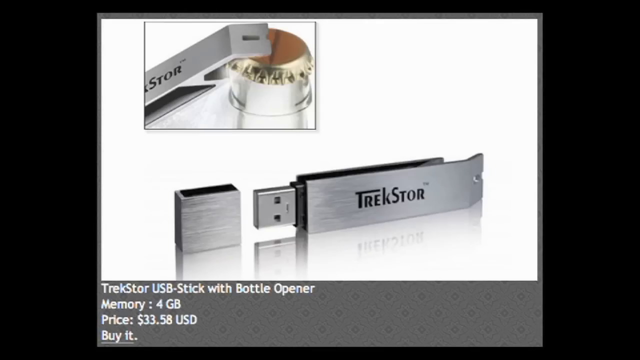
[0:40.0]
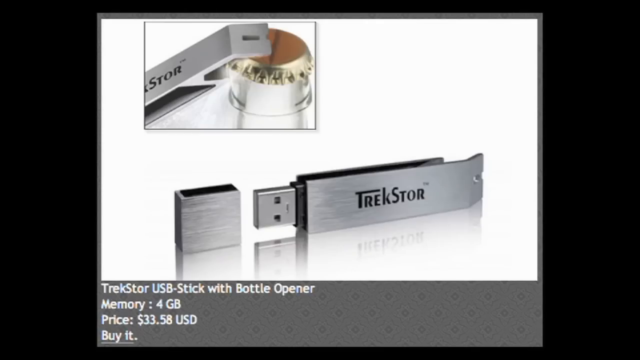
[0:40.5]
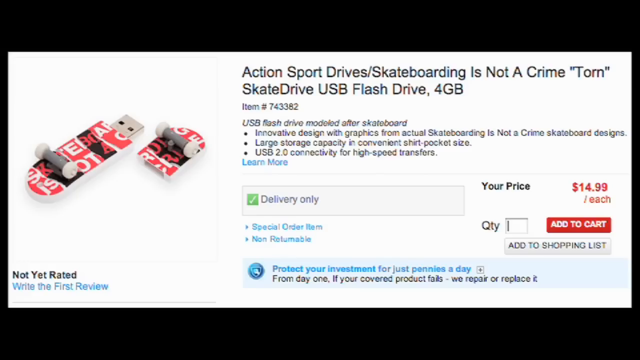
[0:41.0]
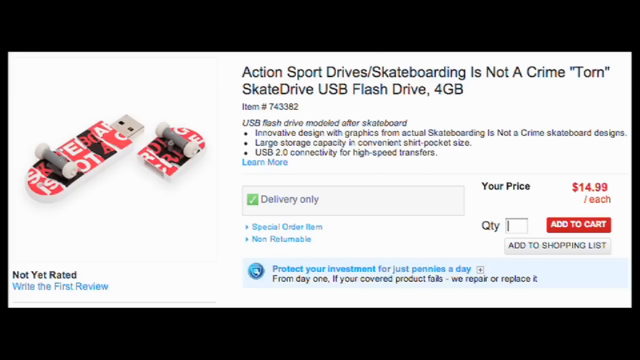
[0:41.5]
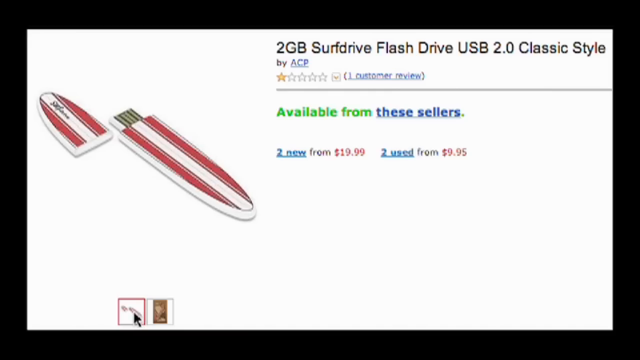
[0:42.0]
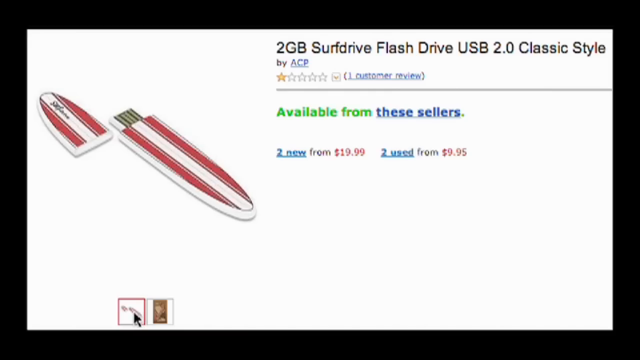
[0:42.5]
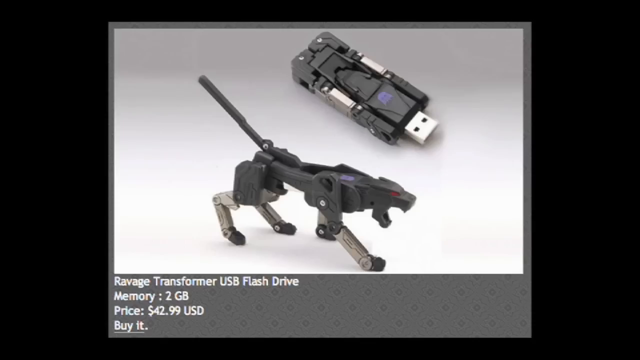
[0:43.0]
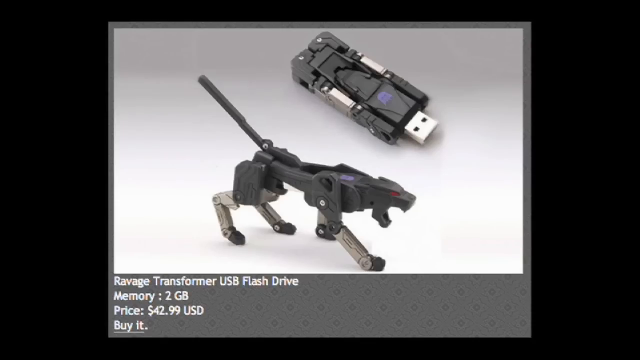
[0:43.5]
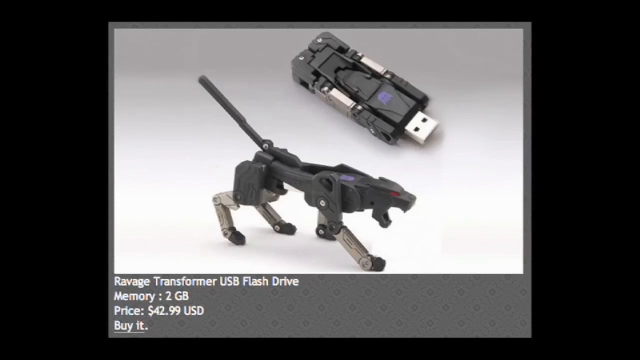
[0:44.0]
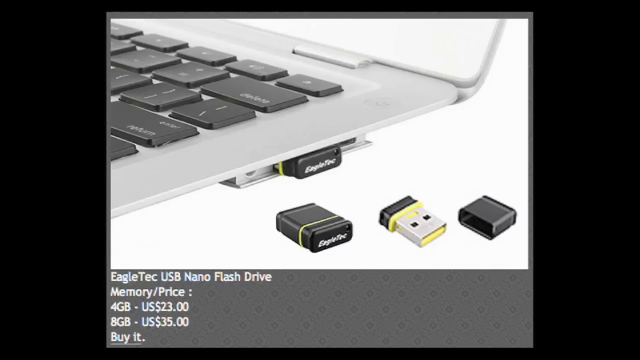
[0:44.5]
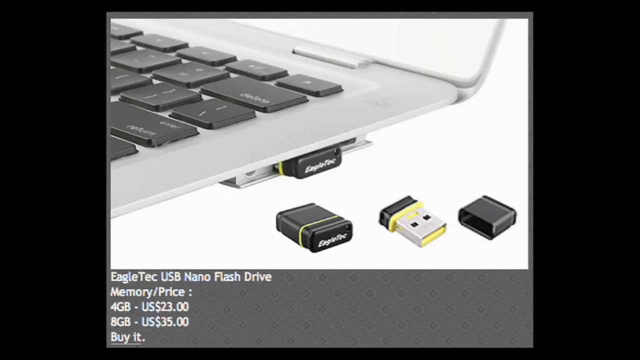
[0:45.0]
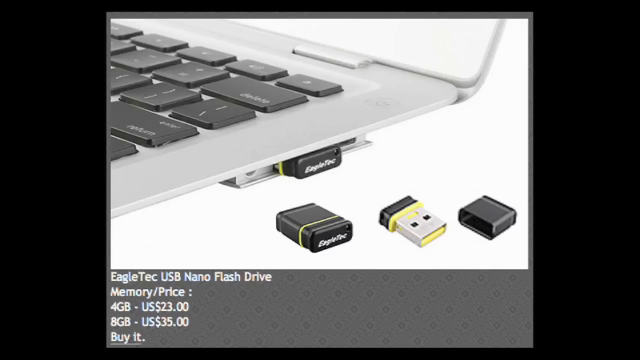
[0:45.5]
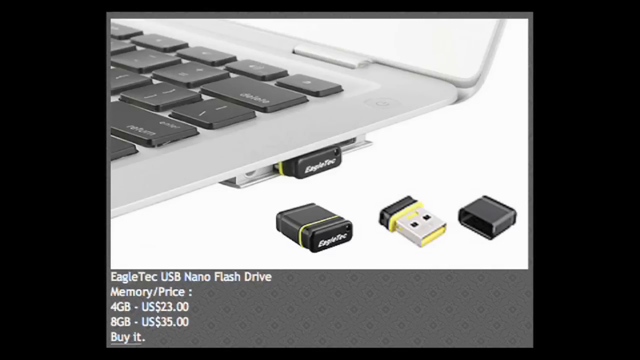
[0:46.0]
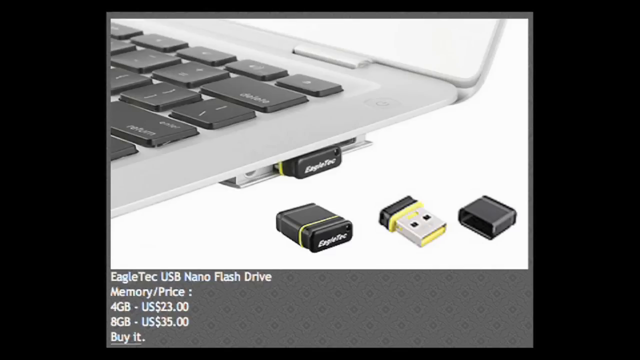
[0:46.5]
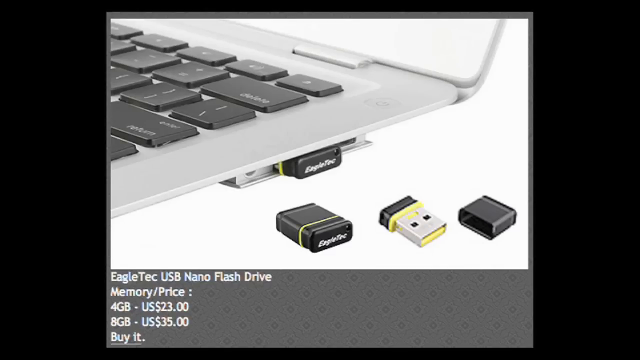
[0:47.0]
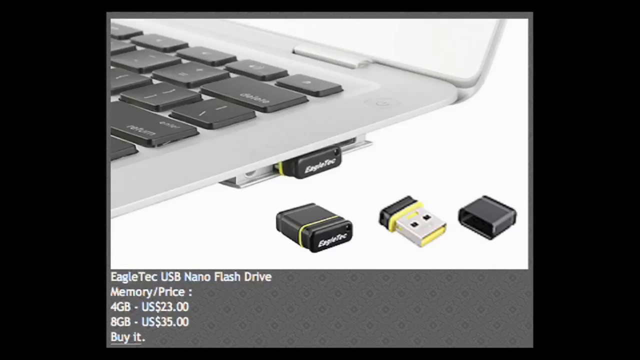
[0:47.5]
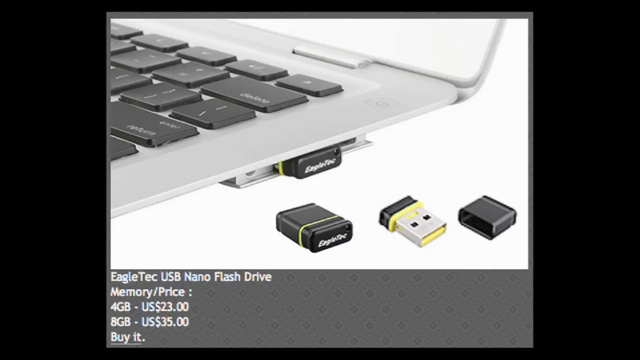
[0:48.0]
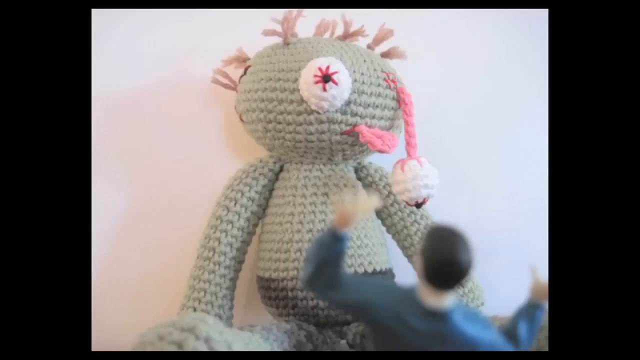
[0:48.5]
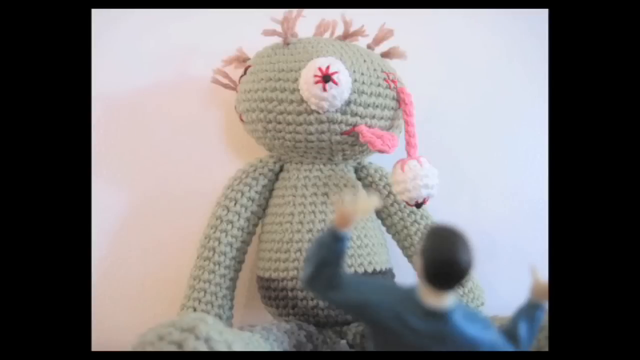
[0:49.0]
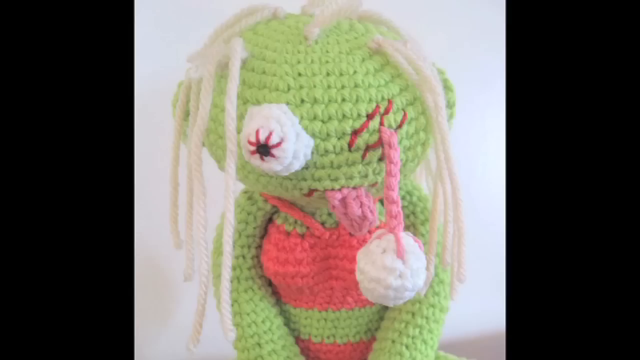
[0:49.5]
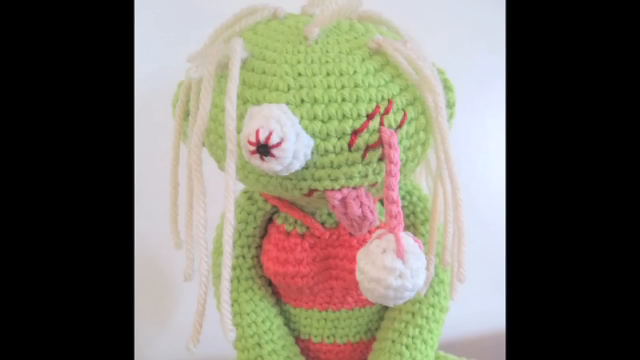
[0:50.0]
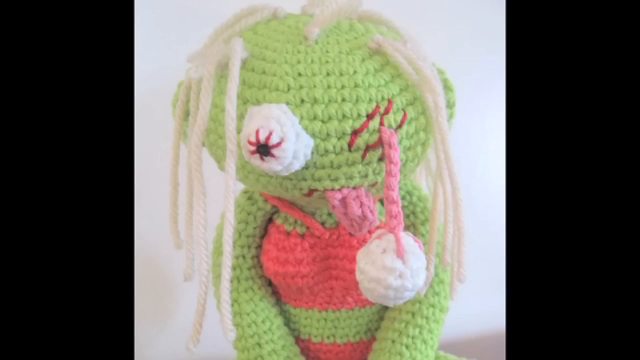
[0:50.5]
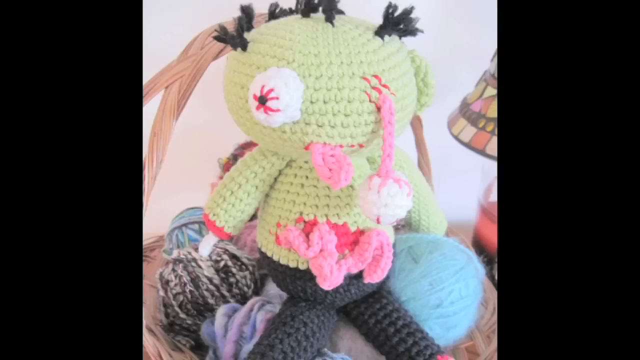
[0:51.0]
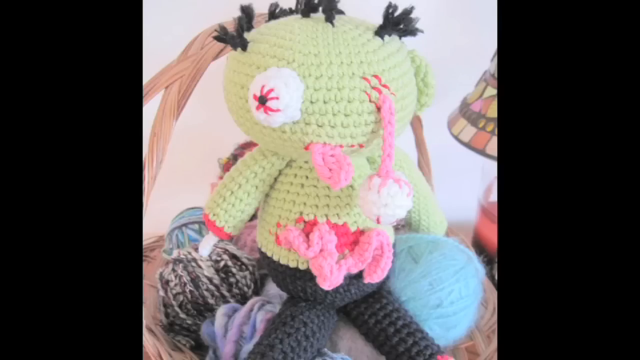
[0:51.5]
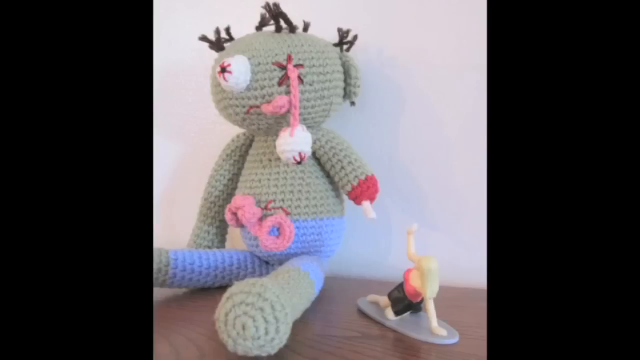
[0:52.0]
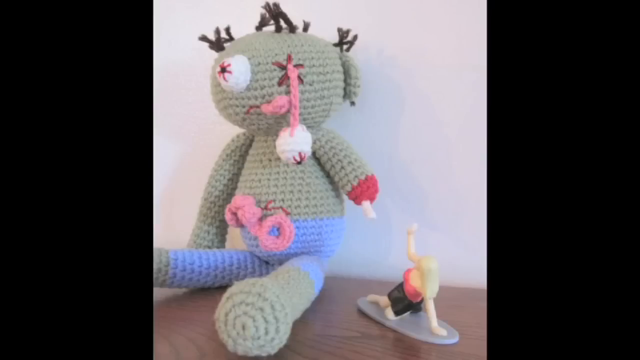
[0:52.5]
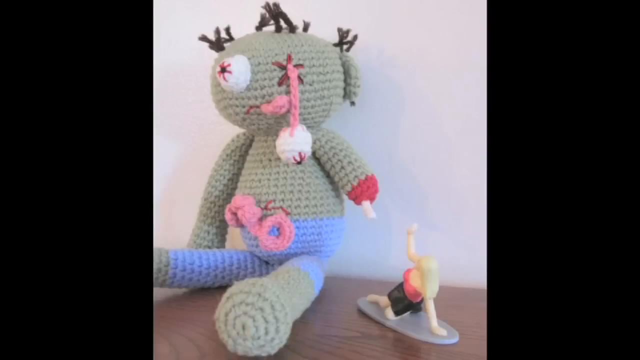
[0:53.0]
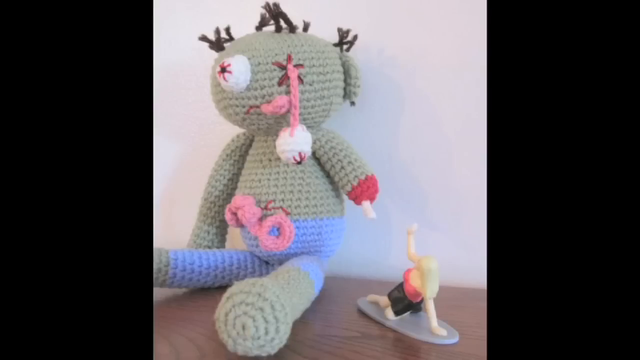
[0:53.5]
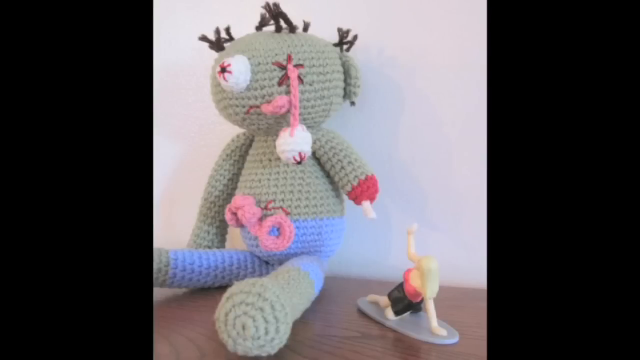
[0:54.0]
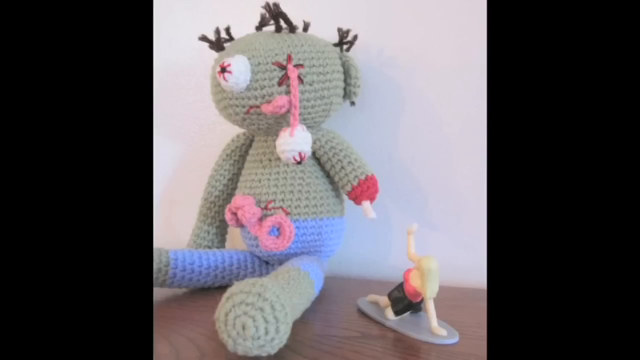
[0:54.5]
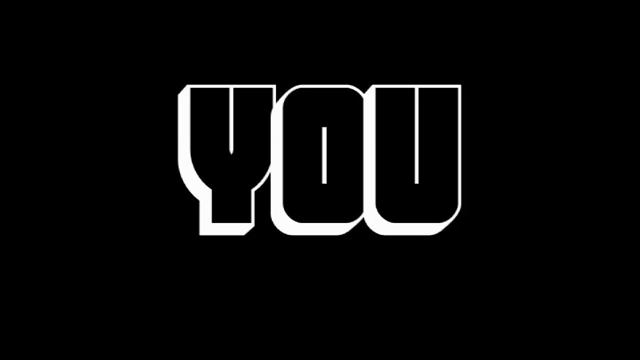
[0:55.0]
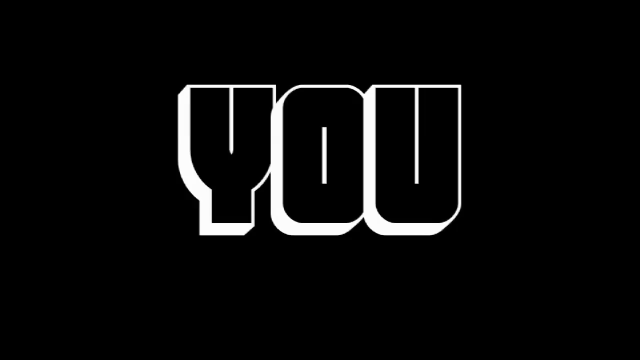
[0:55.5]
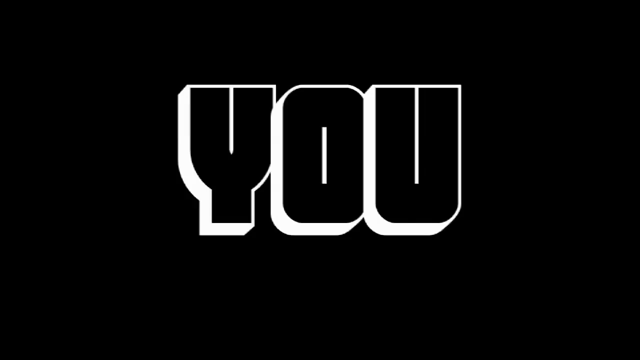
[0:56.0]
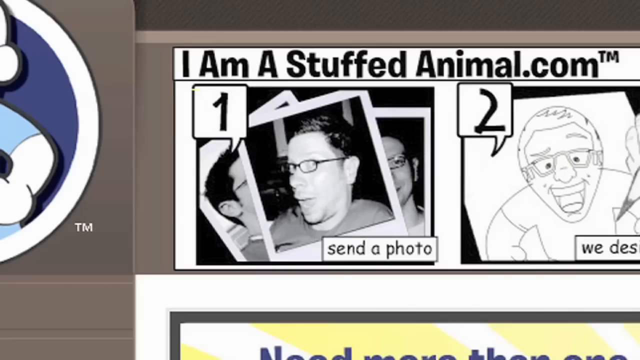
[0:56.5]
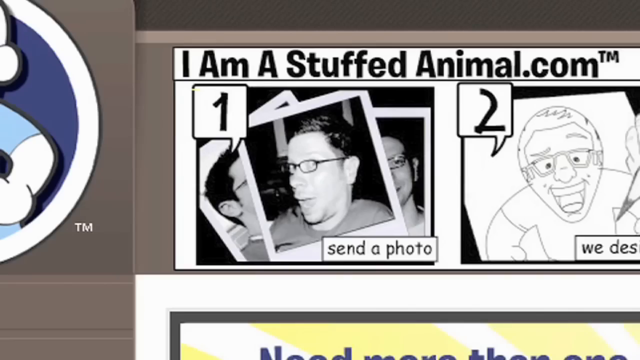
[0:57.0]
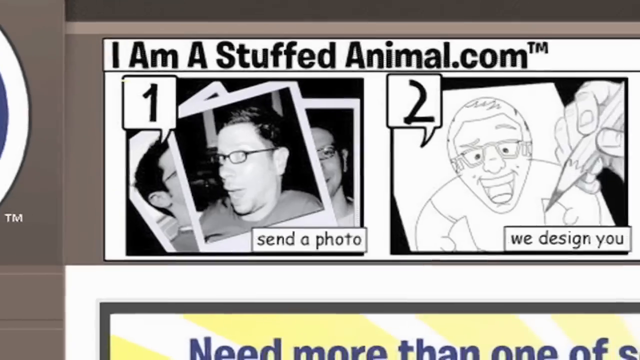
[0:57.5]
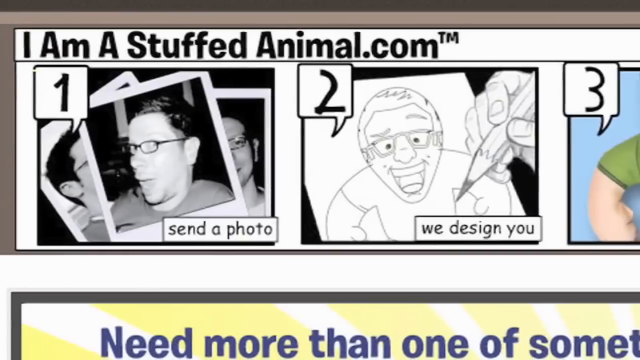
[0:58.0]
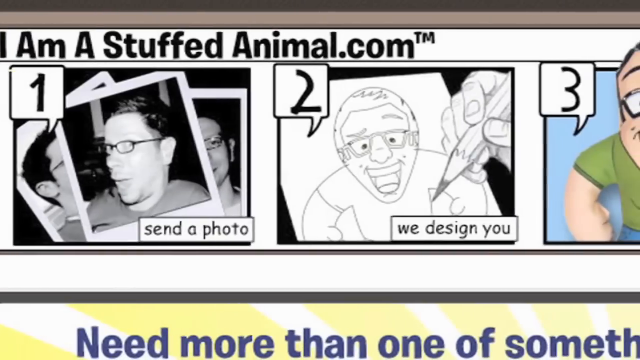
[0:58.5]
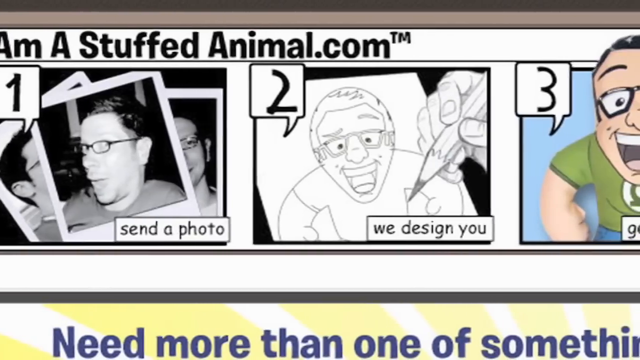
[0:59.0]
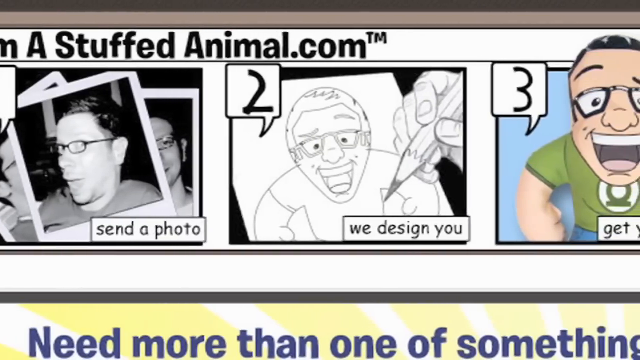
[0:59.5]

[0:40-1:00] What looks like a website shows what kind of looks like a memory stick shaped like a little skateboard, with the skateboard's tires visible. The board is flipped upside down and the memory card is open, so one part of the skateboard looks longer than the other part, which is also facing down. On the right side is black text beginning "action sport drive / skateboarding is not a" and including "usb flash drive four gigabytes". The video cuts to another flash drive that looks like a surfboard in white and red, also open in two pieces. Then another USB drive kind of looks like a black puma when unfolded; it is also shown folded, when it looks more like a traditional USB flash drive, and then it unfolds into a black puma or transformer.